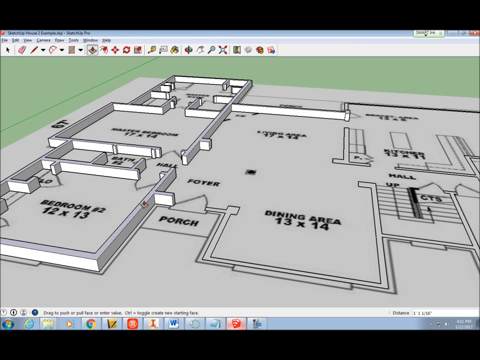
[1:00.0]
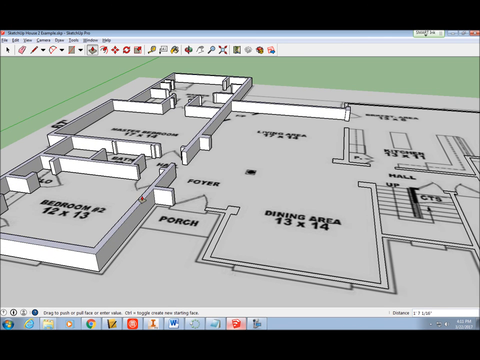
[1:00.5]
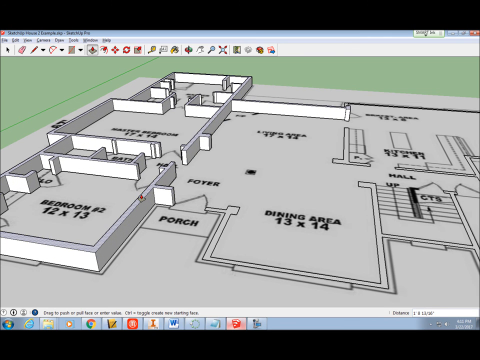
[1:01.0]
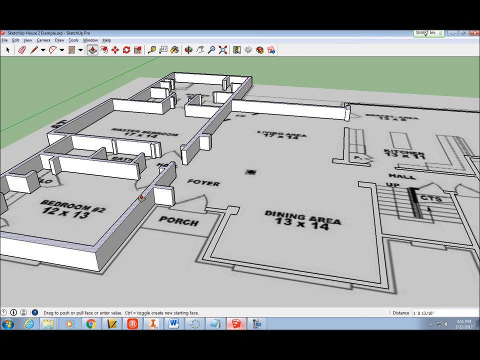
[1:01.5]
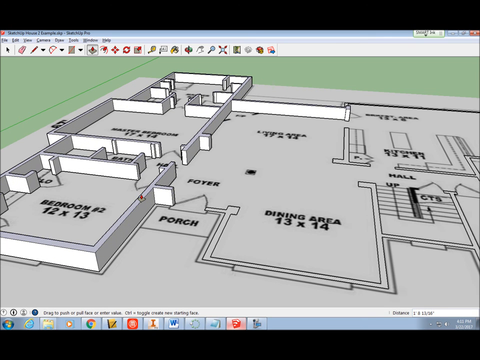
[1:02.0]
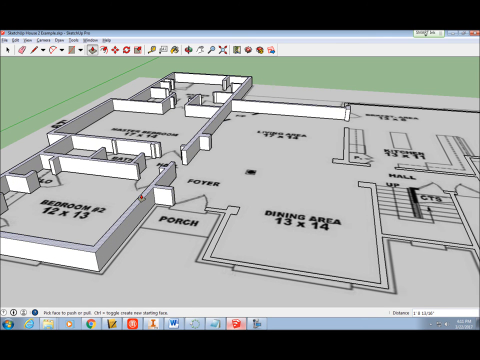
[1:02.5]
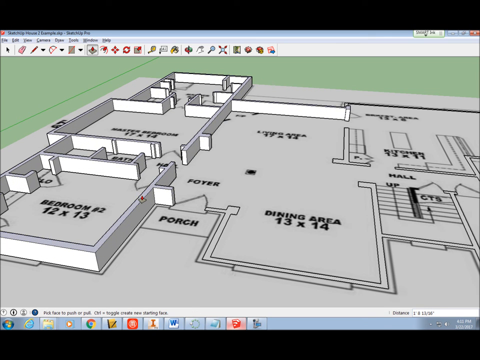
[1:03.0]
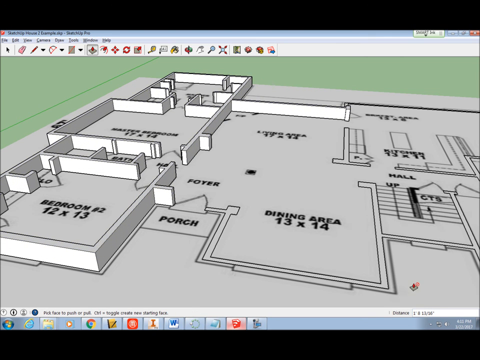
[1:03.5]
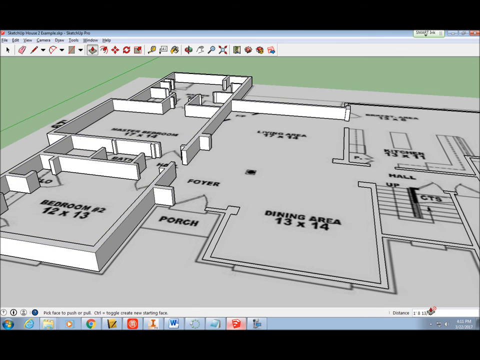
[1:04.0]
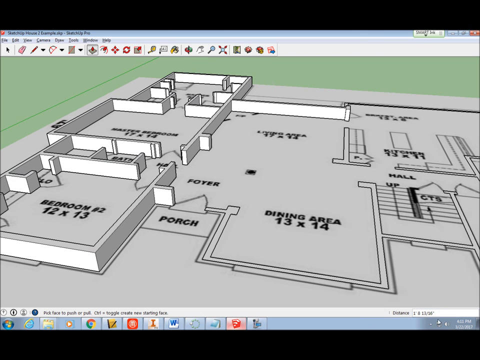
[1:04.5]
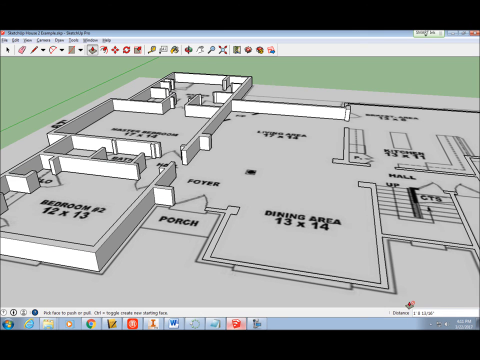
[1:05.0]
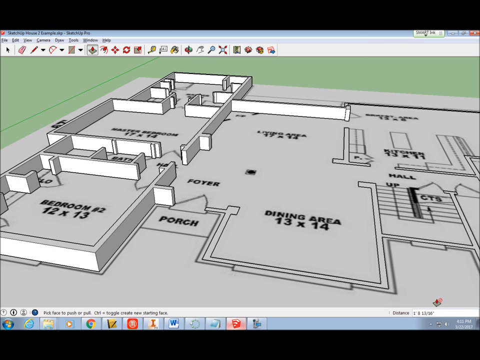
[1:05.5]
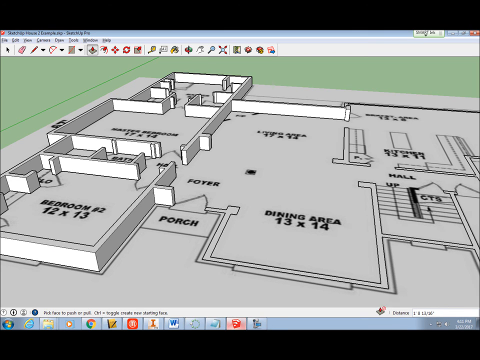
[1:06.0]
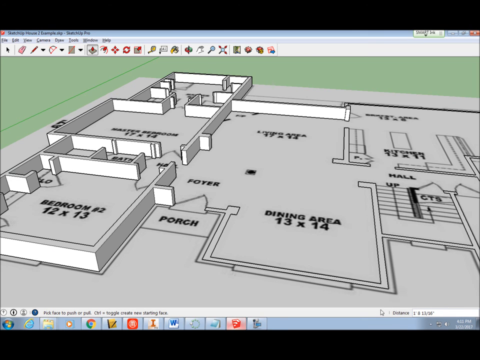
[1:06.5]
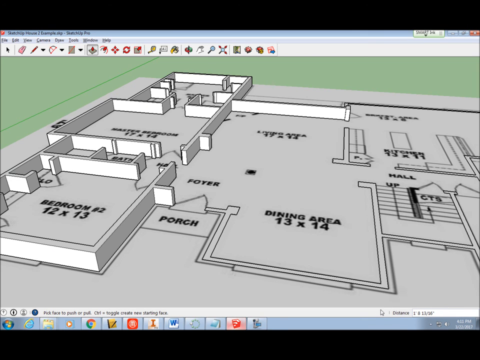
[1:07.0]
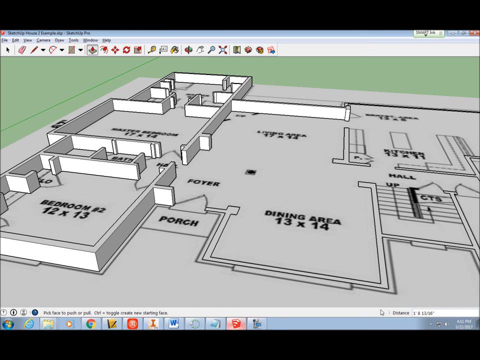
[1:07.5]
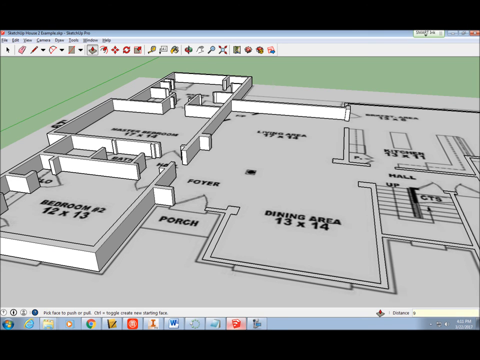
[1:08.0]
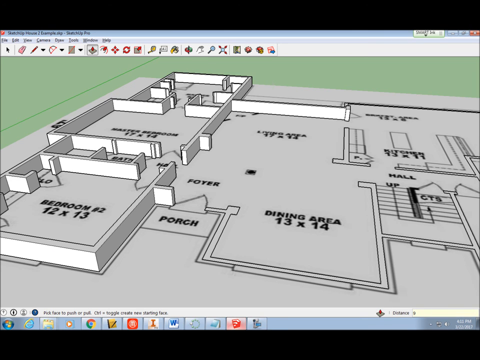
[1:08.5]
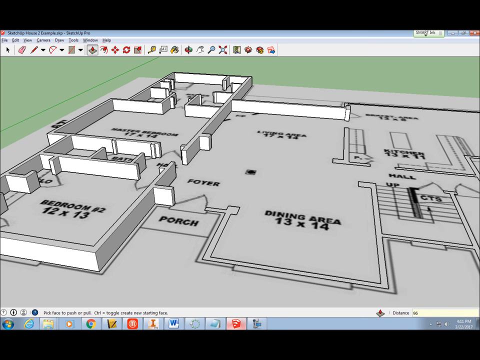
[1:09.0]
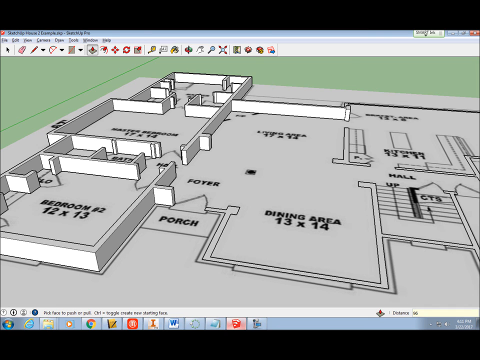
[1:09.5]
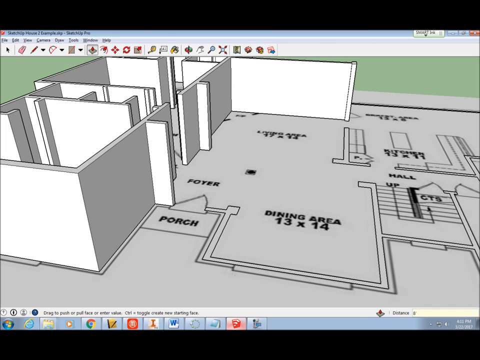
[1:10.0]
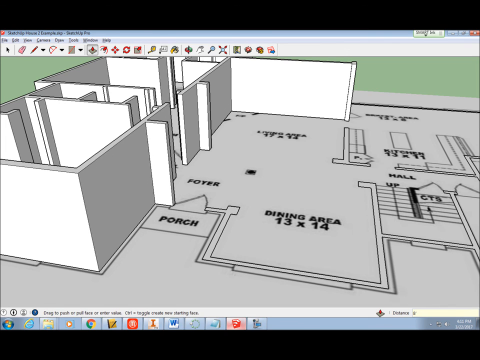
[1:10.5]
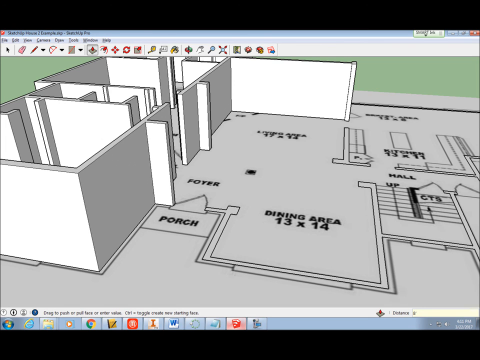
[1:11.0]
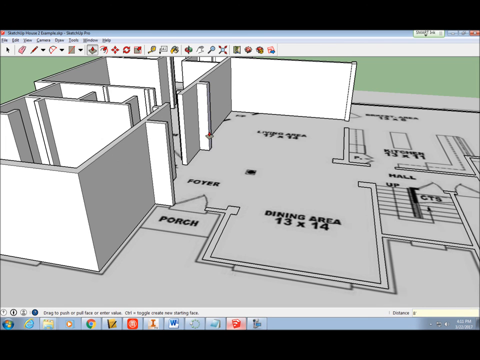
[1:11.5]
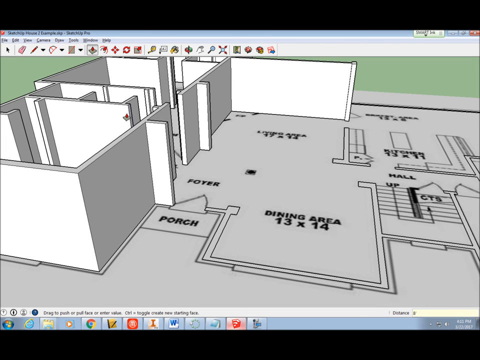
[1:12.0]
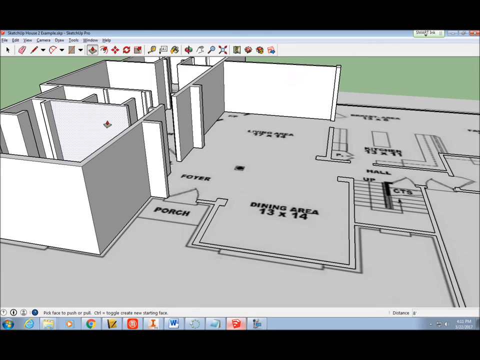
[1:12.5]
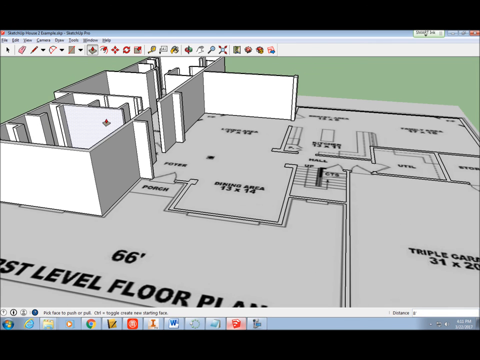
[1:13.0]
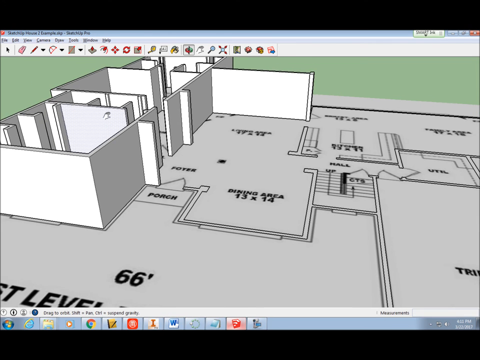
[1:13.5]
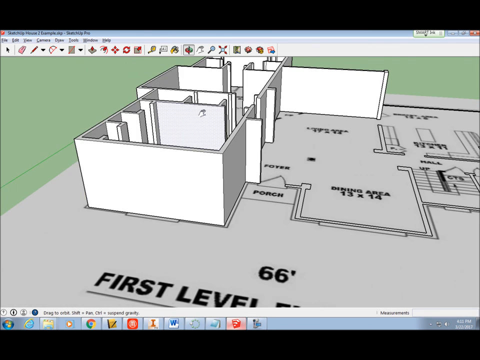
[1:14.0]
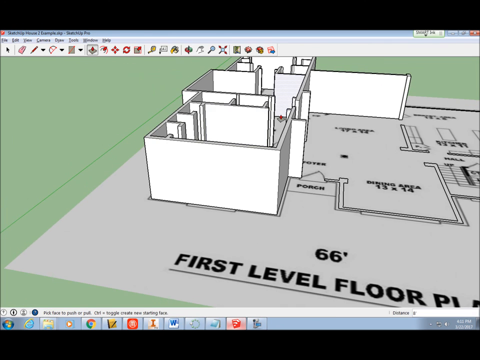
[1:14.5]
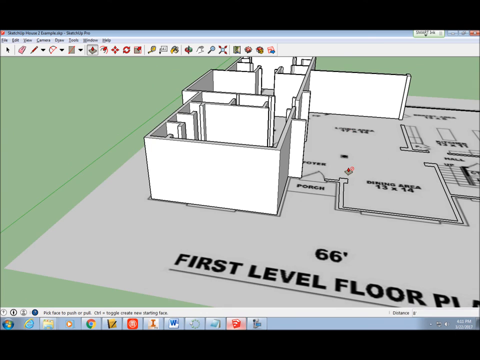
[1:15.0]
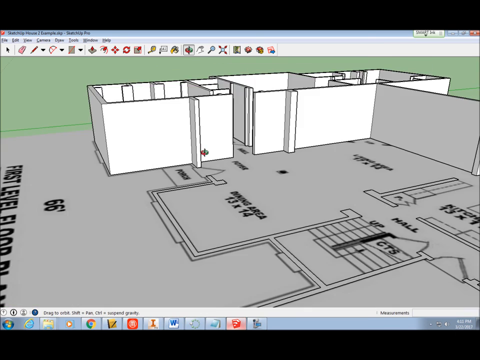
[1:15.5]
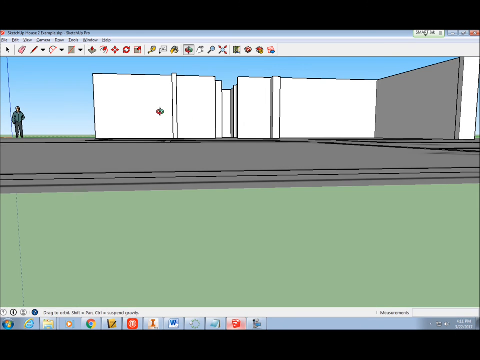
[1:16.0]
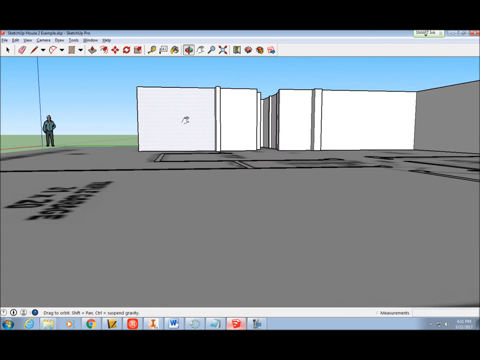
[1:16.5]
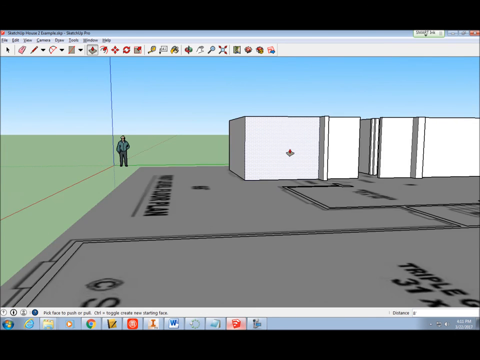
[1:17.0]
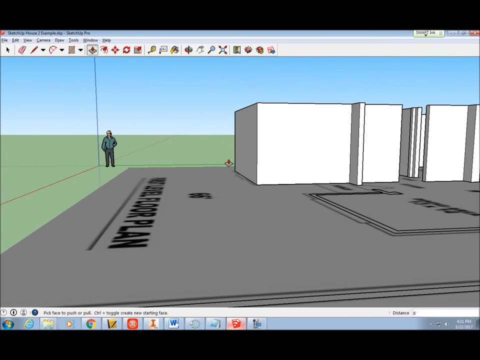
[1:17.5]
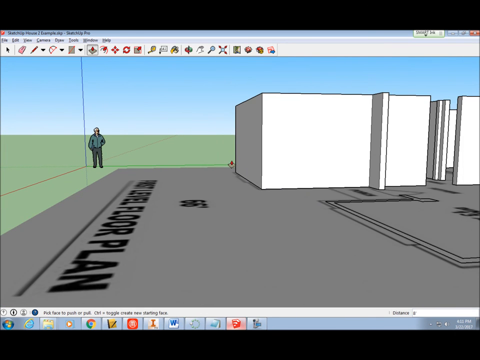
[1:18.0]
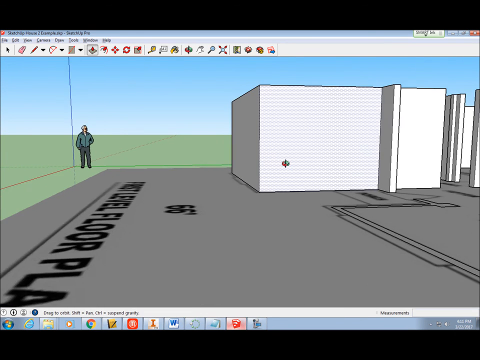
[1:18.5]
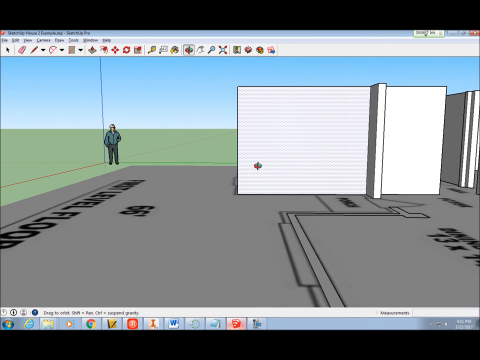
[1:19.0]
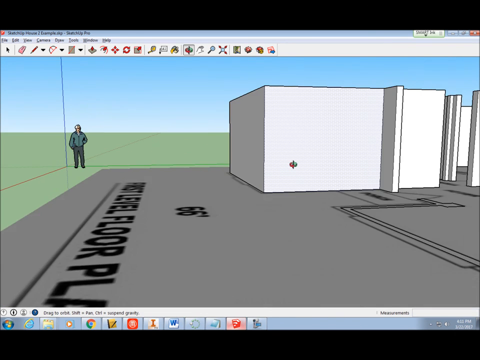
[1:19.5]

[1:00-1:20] A 3D model of a house shows several walls and a few rooms of the floor layout built up, so the doors and the framings of the walls are visible. The cursor slides across from the porch to a wall near the dining area, and the walls grow taller. The image of the floor plan is turned so the view is at a 90 degree angle from where it was. A man is standing in the corner on the outside edge of the floor plan, outside of the house. The view zooms in on one of the walls of bedroom number 2. The image is then turned slightly from left to right, kind of at a 90 degree angle again, looking at the outside front view of that room facing the front of the house, and then goes back to the side of the house facing the interior wall of the porch.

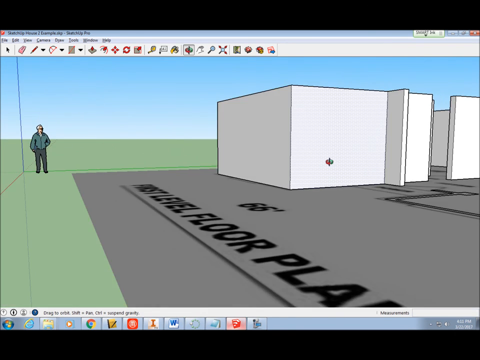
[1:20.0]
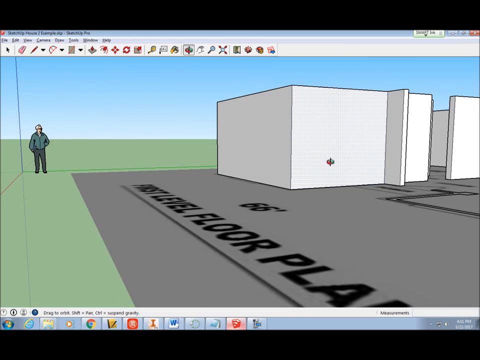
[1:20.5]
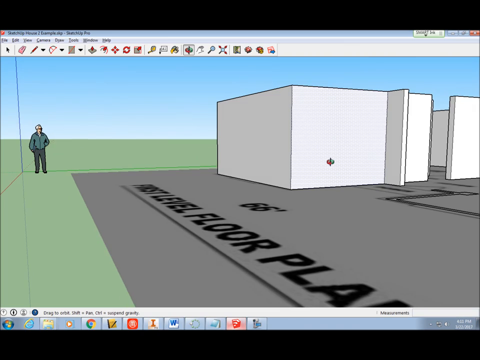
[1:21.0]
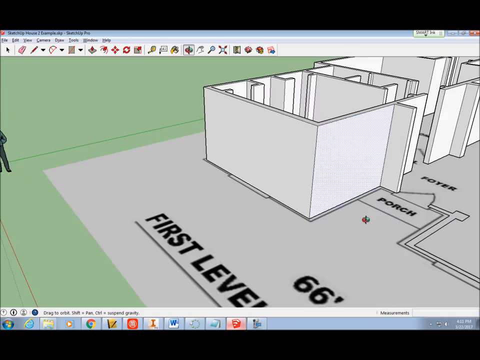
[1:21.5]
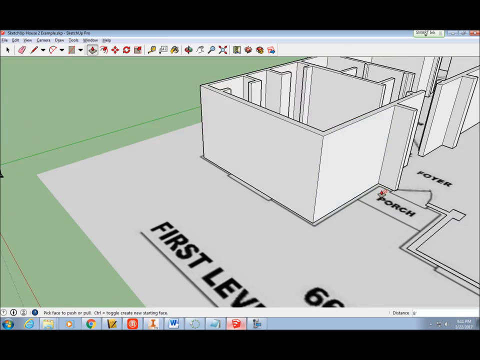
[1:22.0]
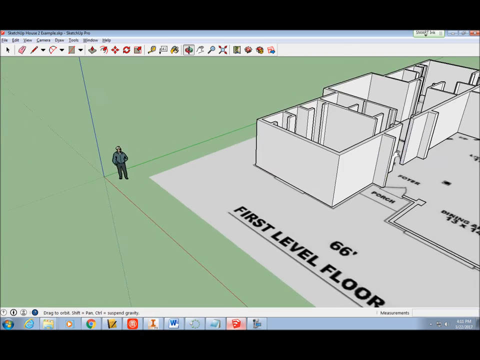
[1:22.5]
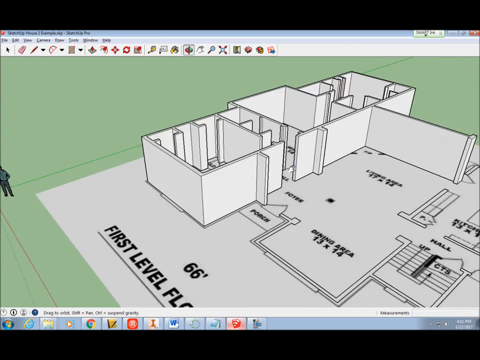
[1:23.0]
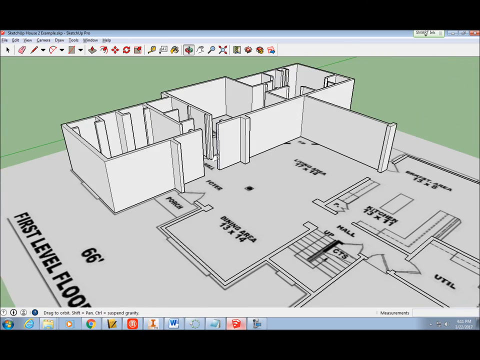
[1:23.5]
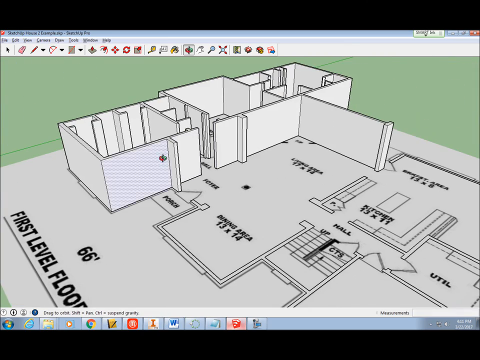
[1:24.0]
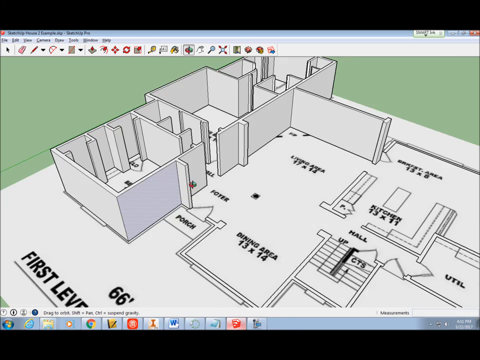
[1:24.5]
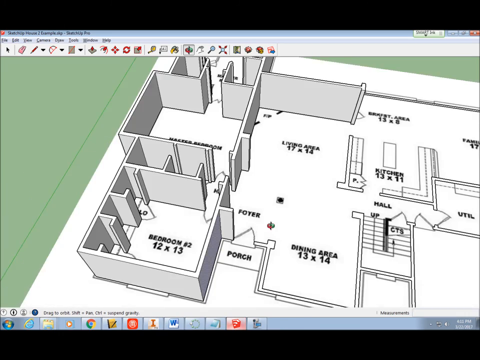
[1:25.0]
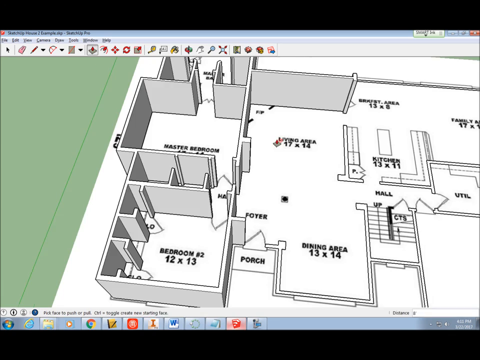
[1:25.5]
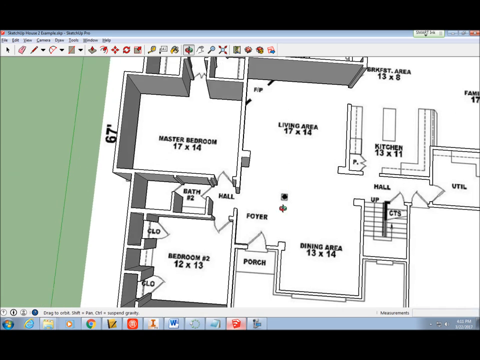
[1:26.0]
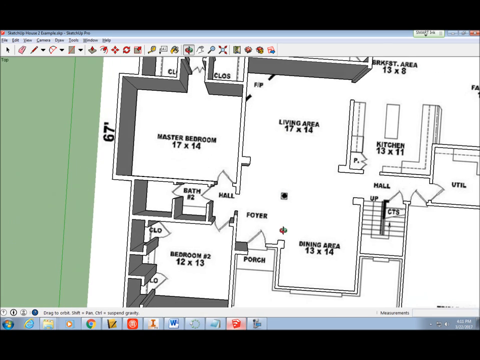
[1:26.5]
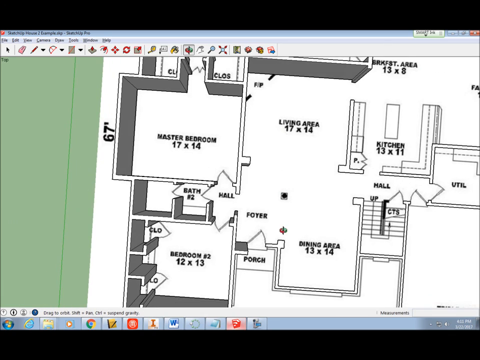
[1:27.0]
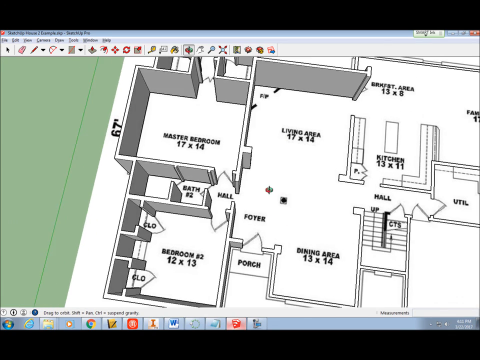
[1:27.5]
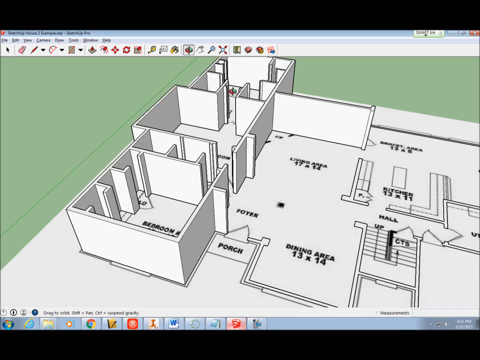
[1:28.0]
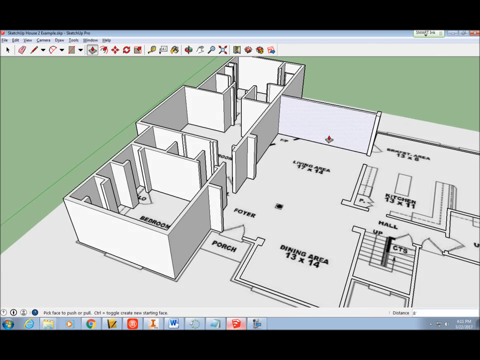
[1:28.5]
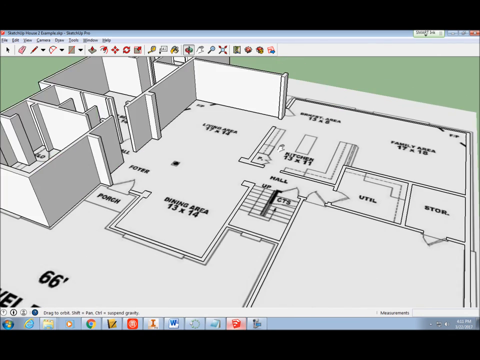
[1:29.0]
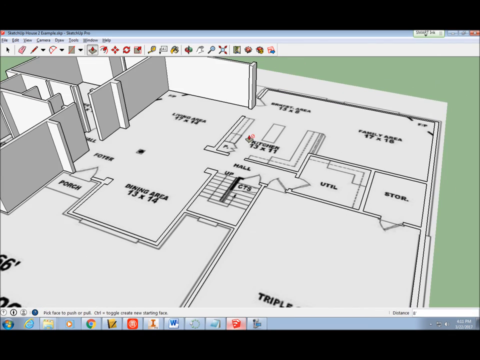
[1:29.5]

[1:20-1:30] A floor plan for the first level of a house is seen from a slightly above angle, with several walls built up in a 3D rendering viewed on a computer in a screen capture style video. The view zooms out and backs away, then zooms out even more to show more of the floor plan, including the dining area, the porch, the foyer, the kitchen and another area, along with the drawings and markings for them. The person clicks on the exterior wall where the porch and the bedroom meet, and the view is slightly turned back to a higher bird's eye view.